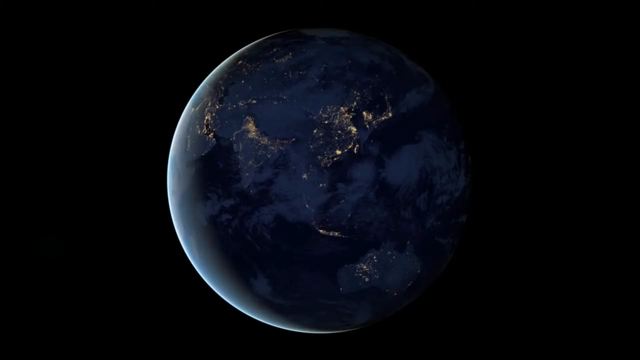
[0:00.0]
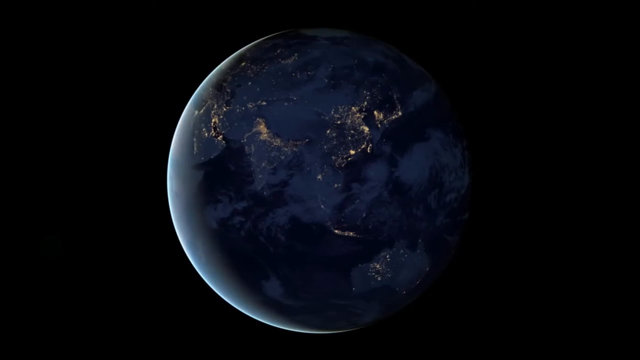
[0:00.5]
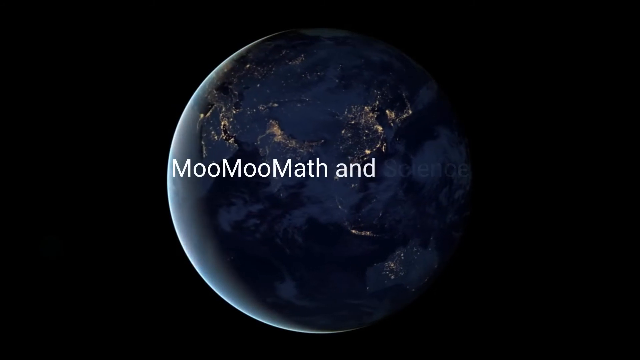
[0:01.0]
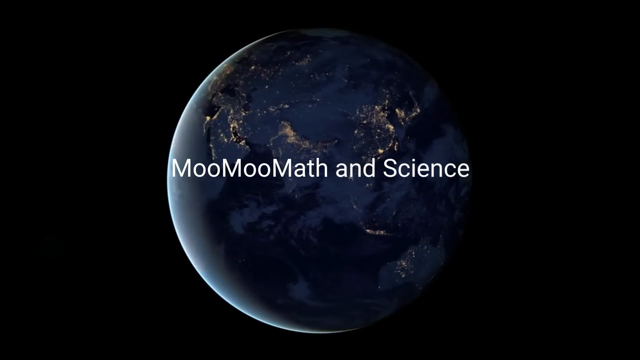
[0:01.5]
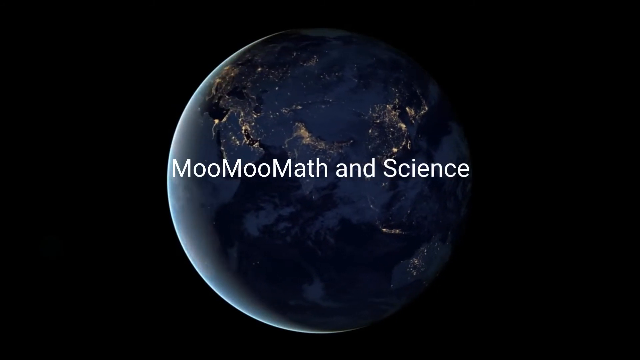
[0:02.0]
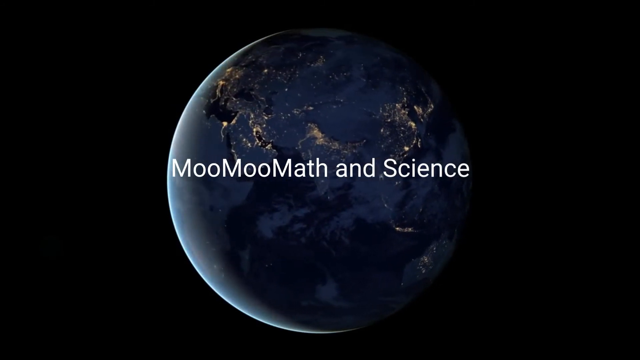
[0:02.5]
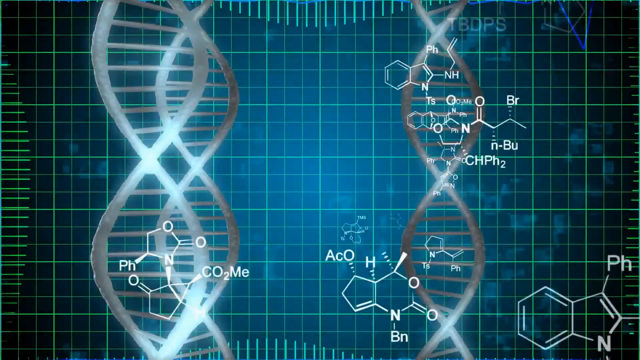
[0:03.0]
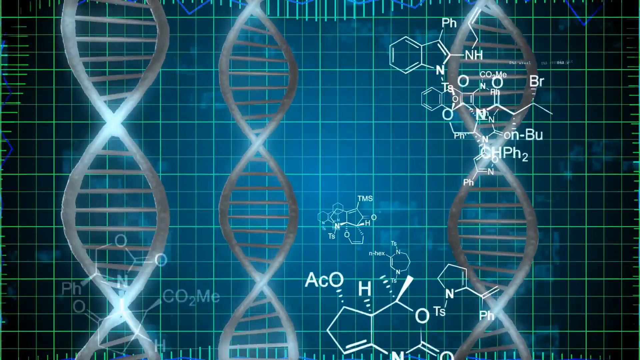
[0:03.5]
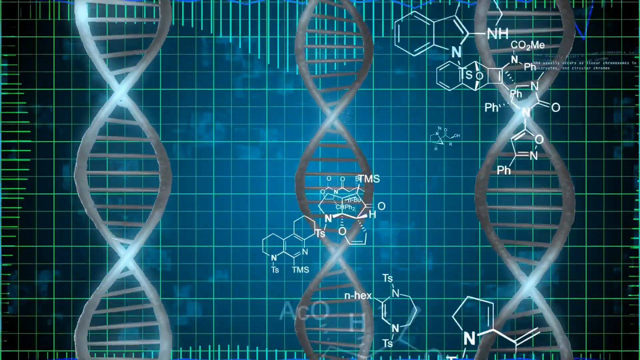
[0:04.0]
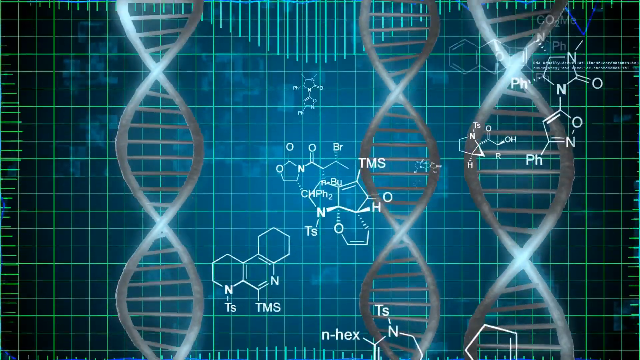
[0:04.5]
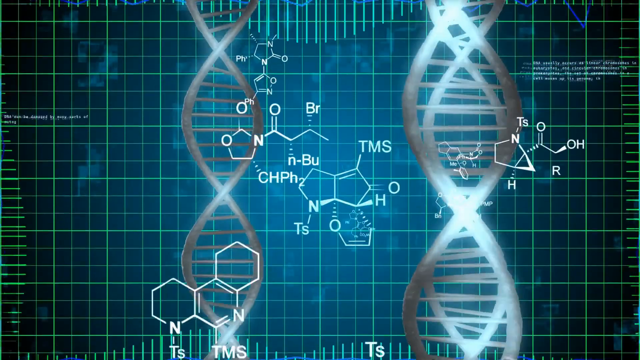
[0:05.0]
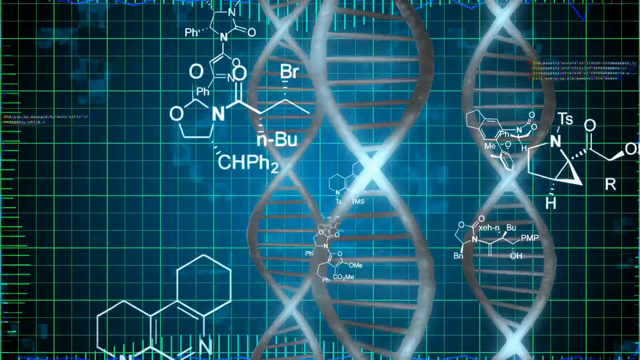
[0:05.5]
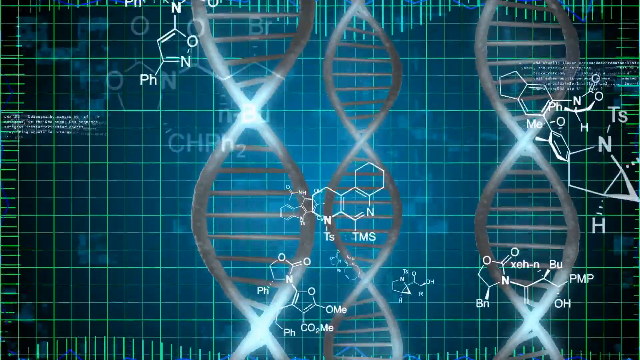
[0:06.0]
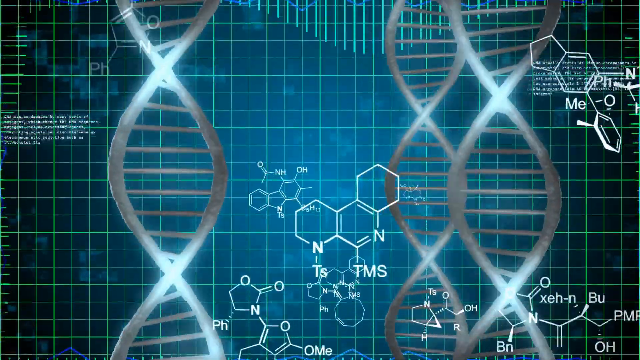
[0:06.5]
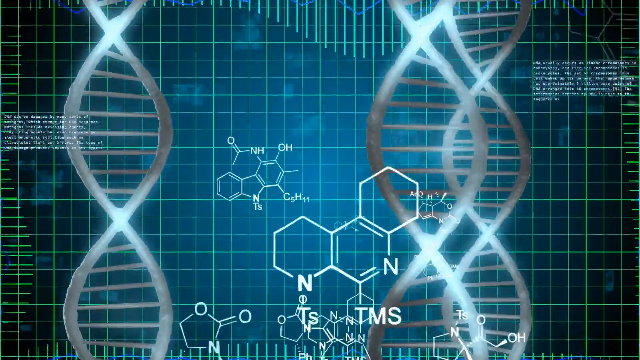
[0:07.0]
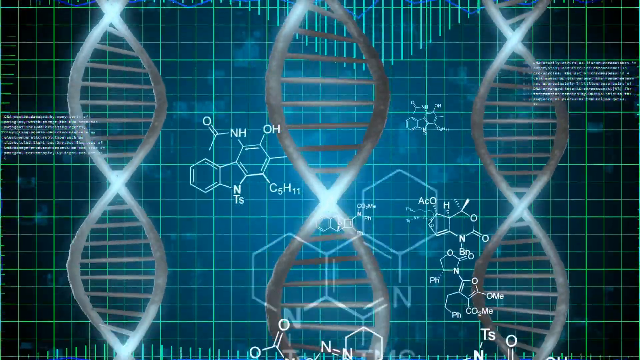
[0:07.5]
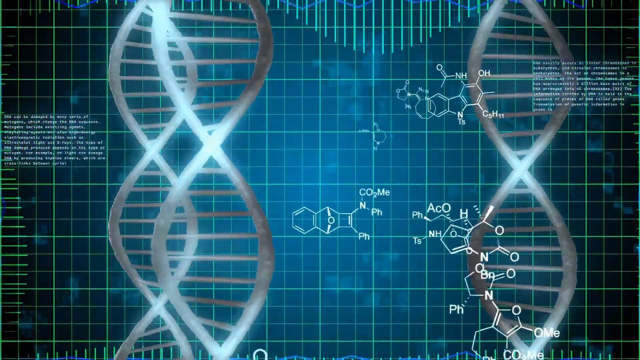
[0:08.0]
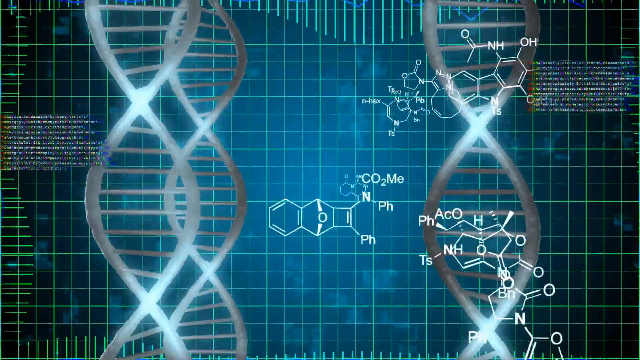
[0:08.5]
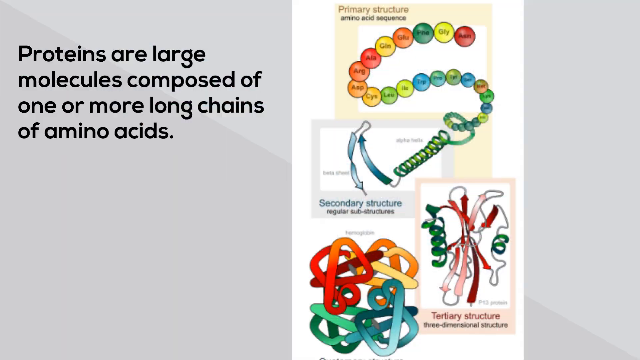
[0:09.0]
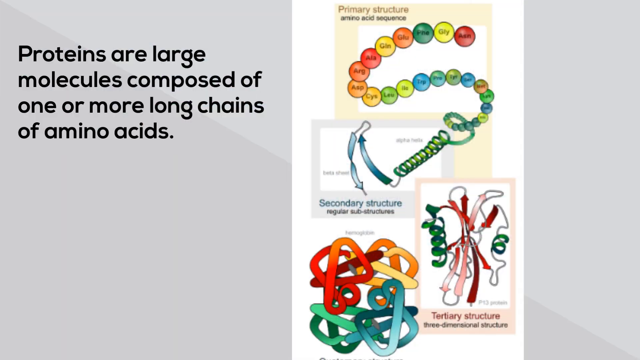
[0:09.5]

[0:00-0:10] The video opens with the earth spinning, seen from space, and the text "Moo Moo Math and Science" appears on top of it. A few seconds in, the scene changes to a grid with three DNA helixes spinning, along with many chemical skeletal formulas showing the abbreviations of the chemicals, zooming in or coming out from the center. The video then moves to a slide about proteins with a picture of multicolored proteins shown first in the primary structure, then the secondary structure, then the tertiary structure, where the protein is folded in on itself. Text on the slide reads "proteins are large molecules composed of one or more long chains of amino acids." The primary structure shows amino acids lined up one after the other, the secondary structure shows the amino acid coiled on itself, and the tertiary structure is a three-dimensional structure.